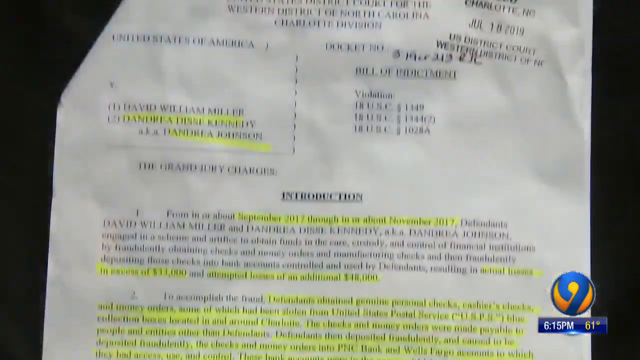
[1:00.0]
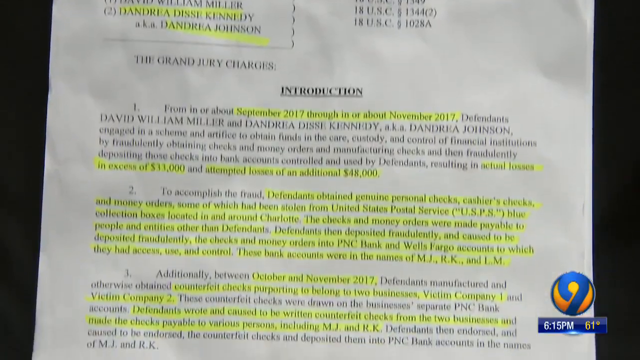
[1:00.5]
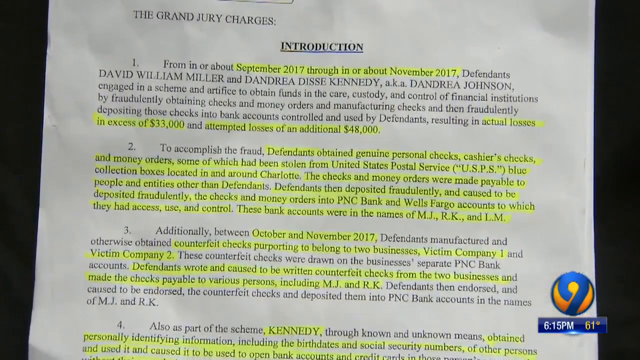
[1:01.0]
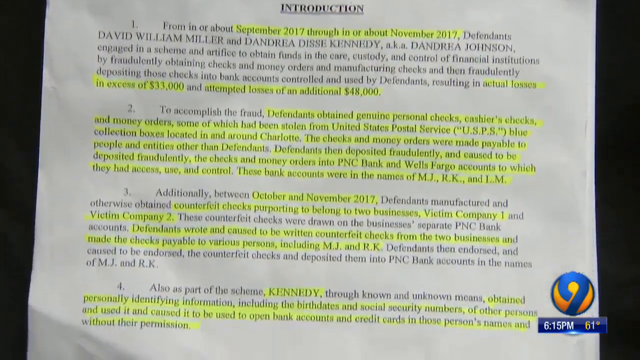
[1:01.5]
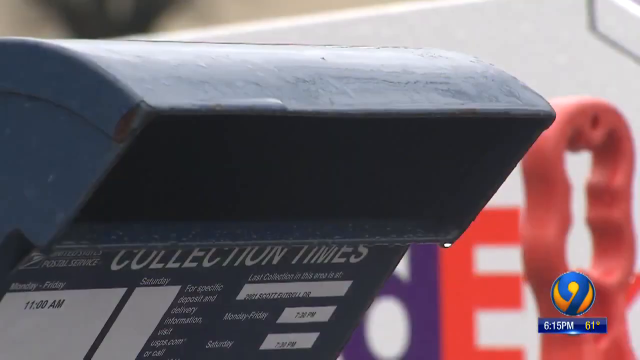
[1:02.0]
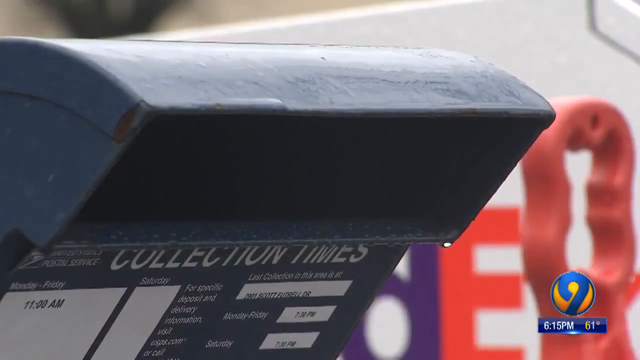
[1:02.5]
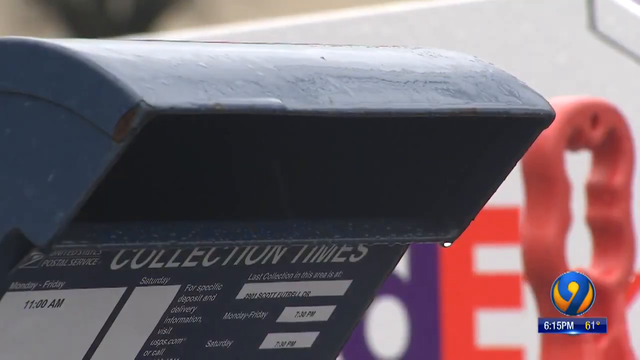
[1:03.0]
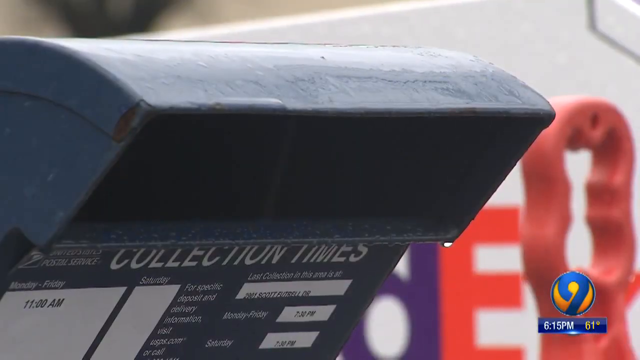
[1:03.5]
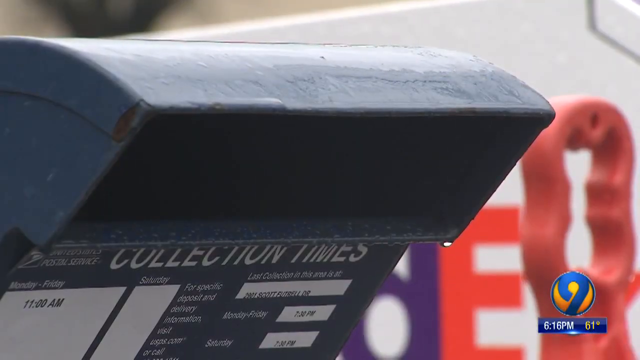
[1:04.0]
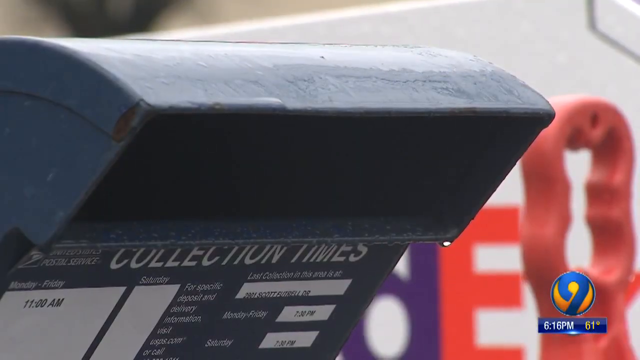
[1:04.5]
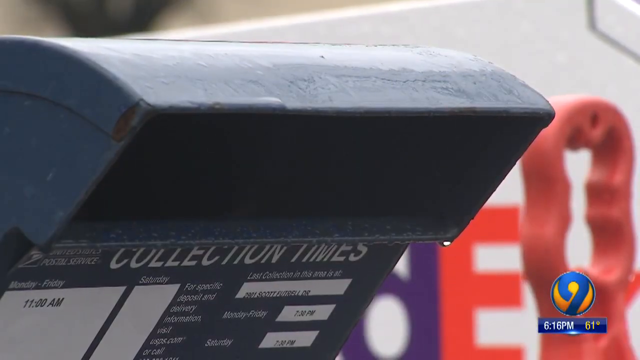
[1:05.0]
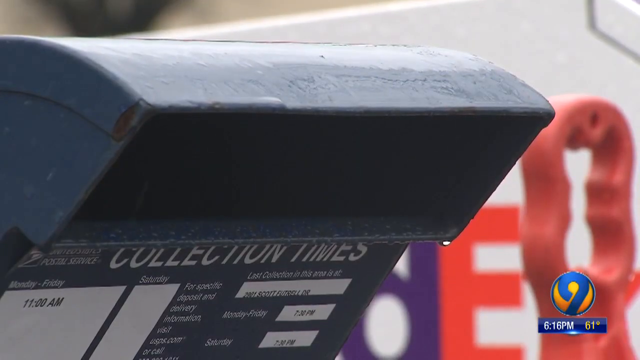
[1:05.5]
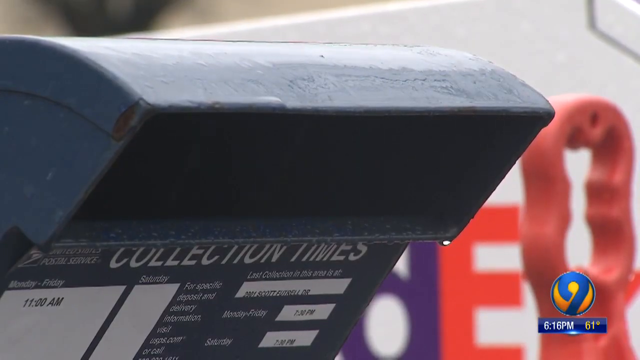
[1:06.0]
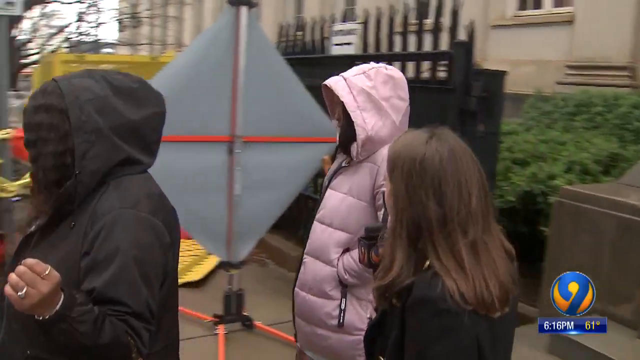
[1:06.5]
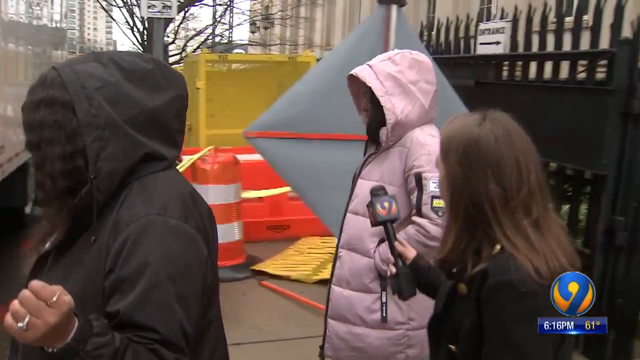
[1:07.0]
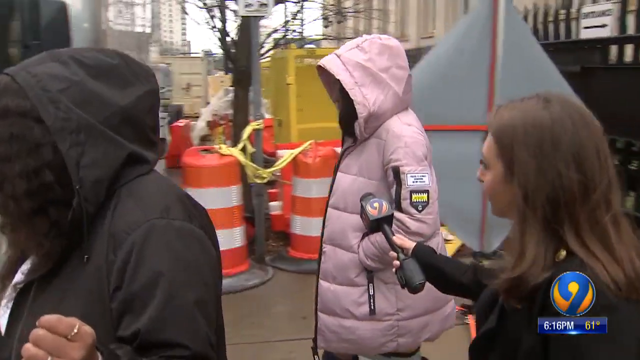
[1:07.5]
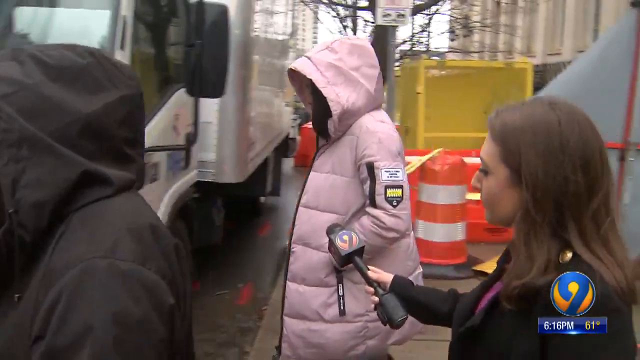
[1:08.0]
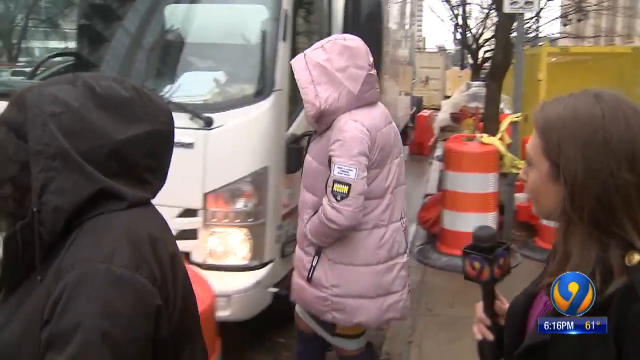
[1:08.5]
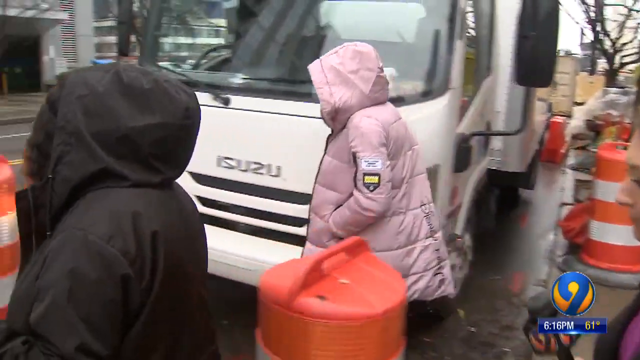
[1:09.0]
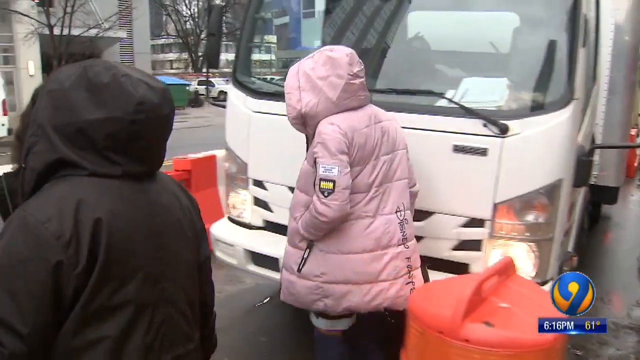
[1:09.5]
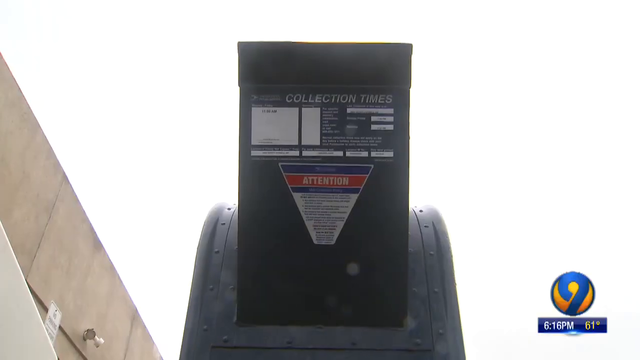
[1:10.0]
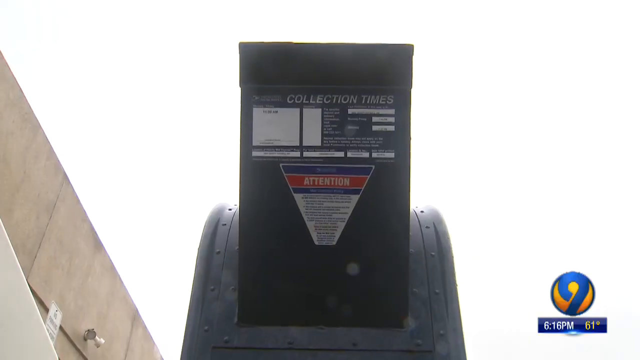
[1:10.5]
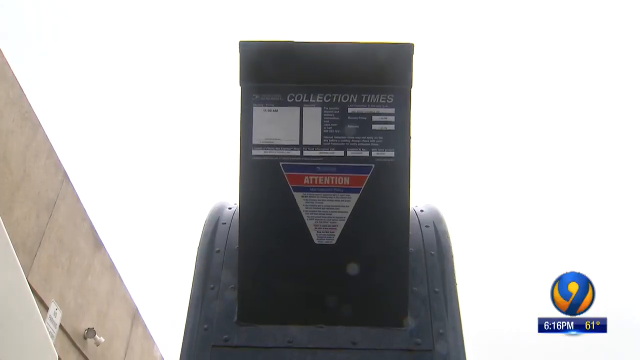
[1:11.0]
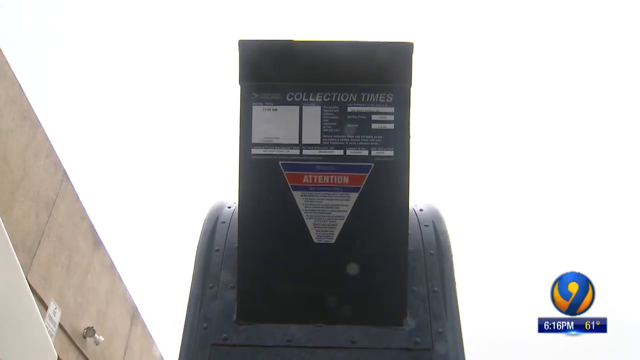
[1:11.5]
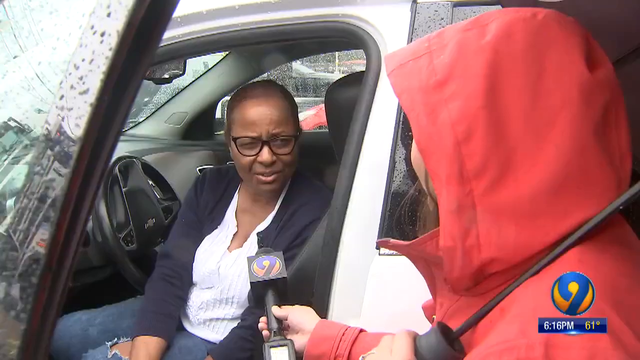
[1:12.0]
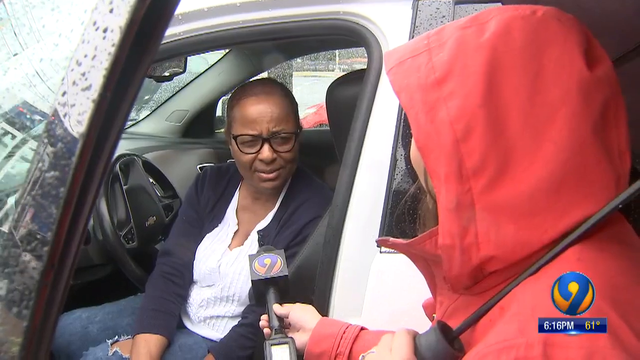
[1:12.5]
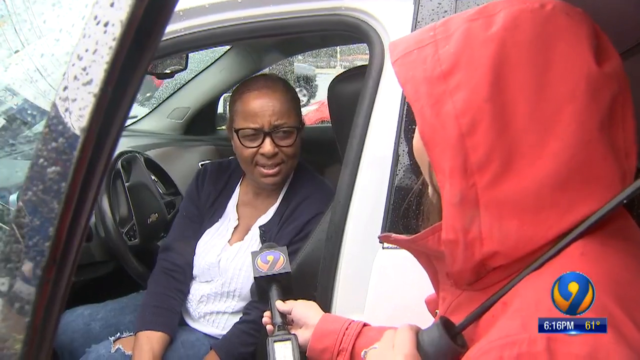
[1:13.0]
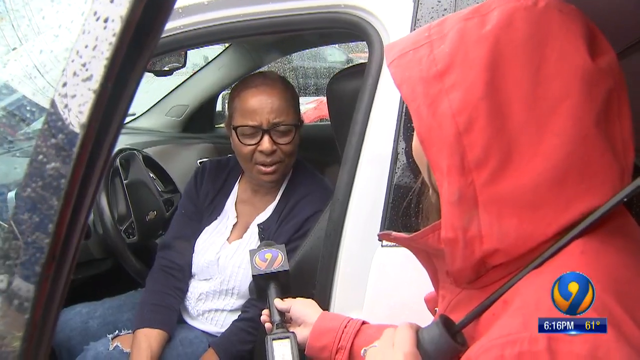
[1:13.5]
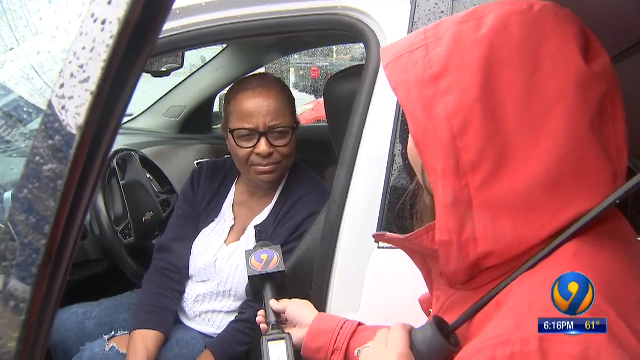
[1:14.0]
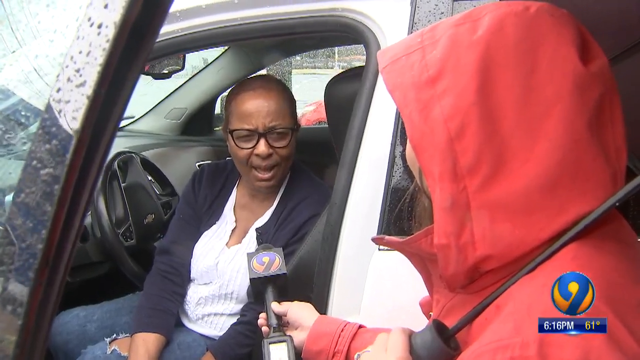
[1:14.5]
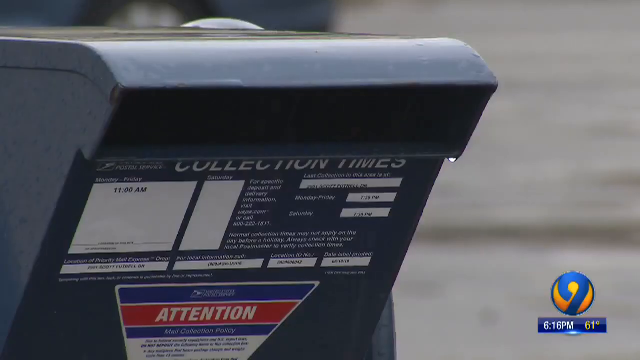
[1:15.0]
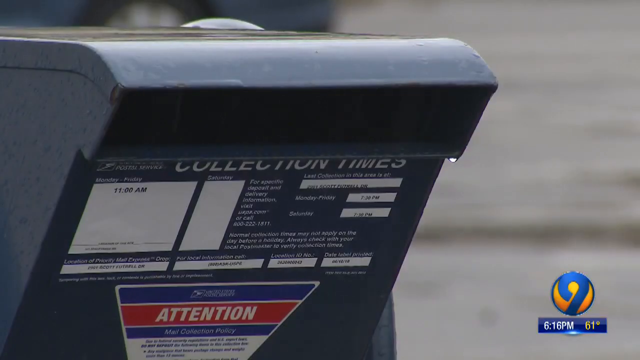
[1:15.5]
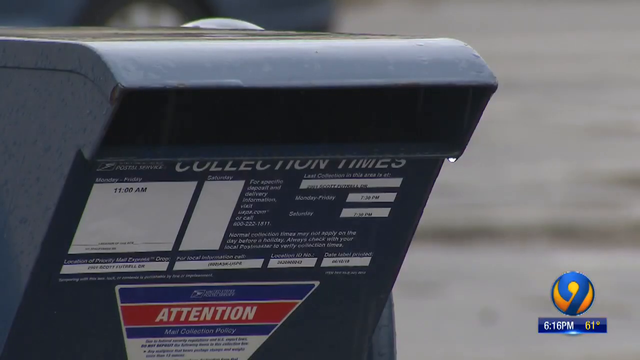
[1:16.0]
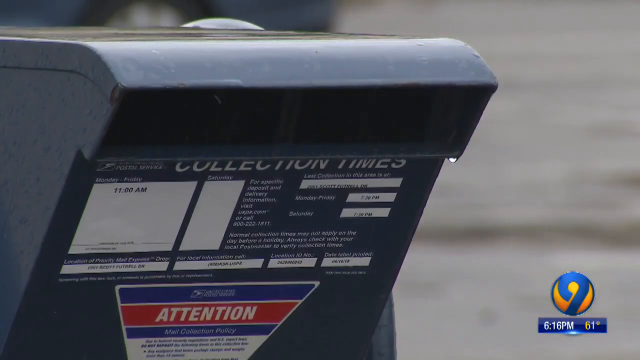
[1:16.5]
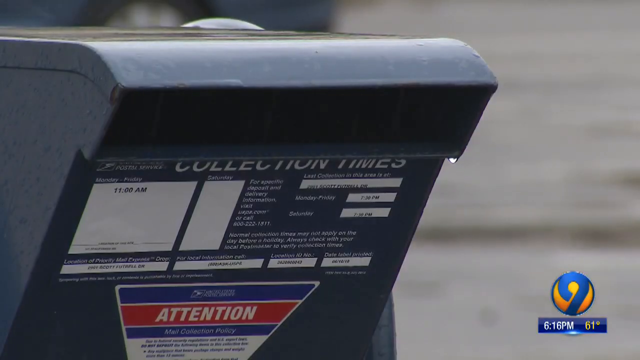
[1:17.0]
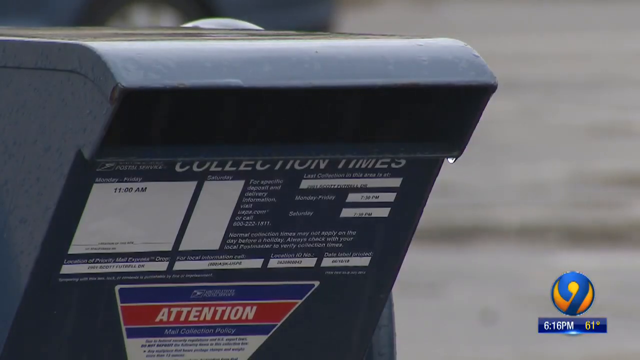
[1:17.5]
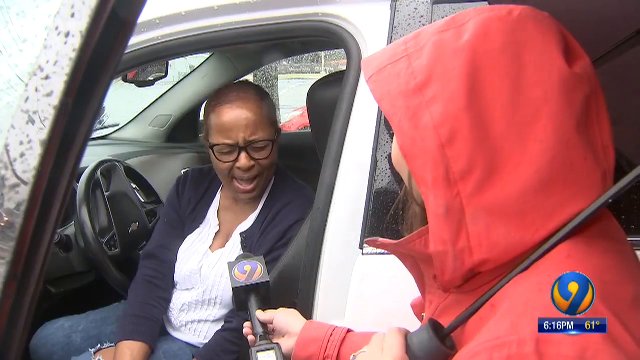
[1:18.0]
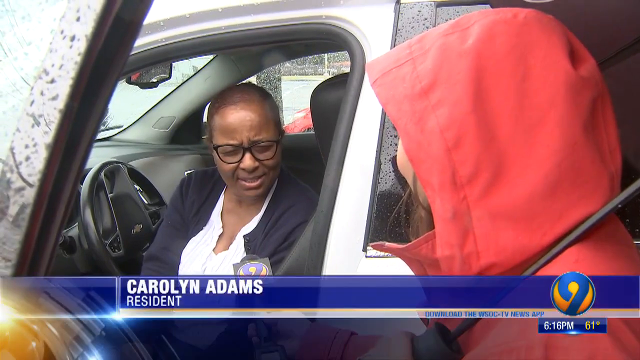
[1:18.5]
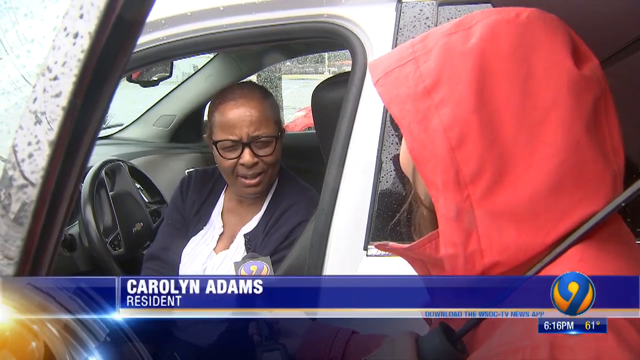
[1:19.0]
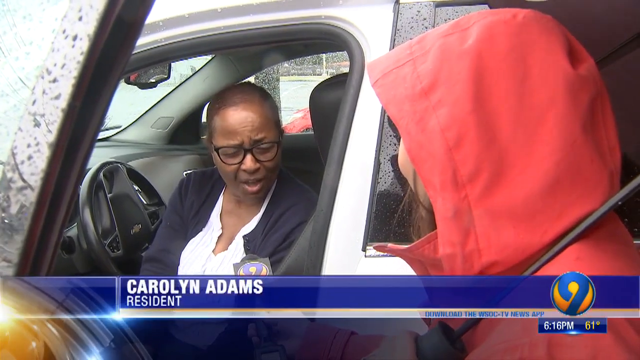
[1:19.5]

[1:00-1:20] A black-and-white document appears, seemingly with yellow highlights. The scene changes to a black post office box for posting letters. Then the scene returns to the two ladies coming out of a building that appears to be a courtroom, one in a pink jacket and the other in a black jacket. A reporter holding a microphone tries to get information from them, but they ignore her completely as they walk past a truck parked on the road. In another scene, the other reporter, wearing a red jacket, interviews a Black woman sitting in a car while it rains; the woman is a resident of the area named Carol.